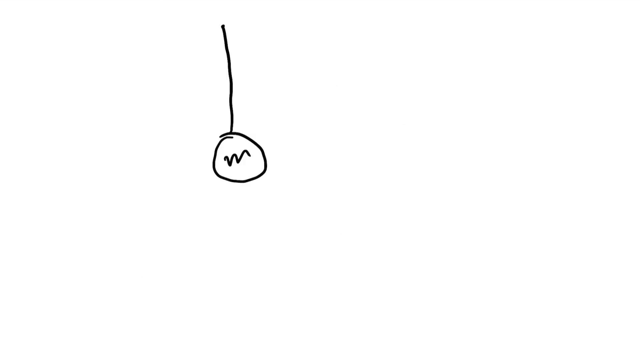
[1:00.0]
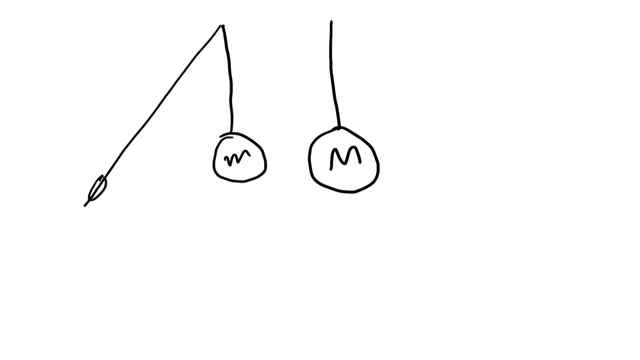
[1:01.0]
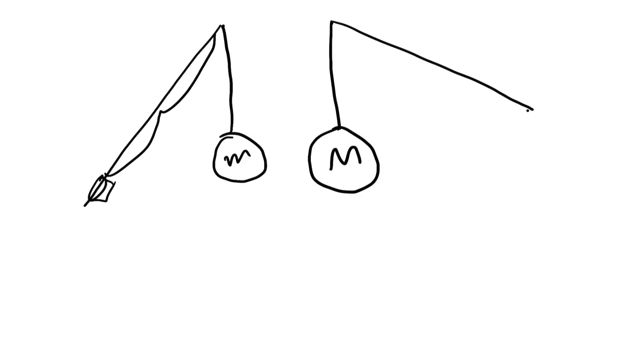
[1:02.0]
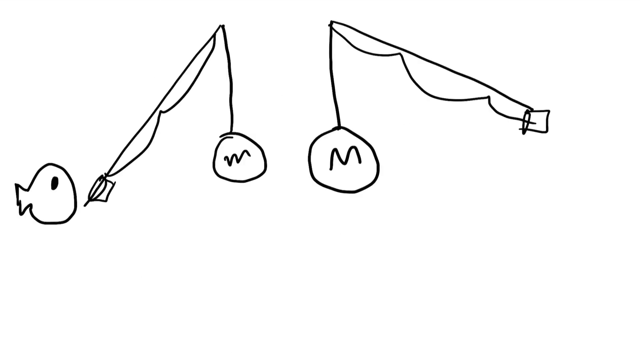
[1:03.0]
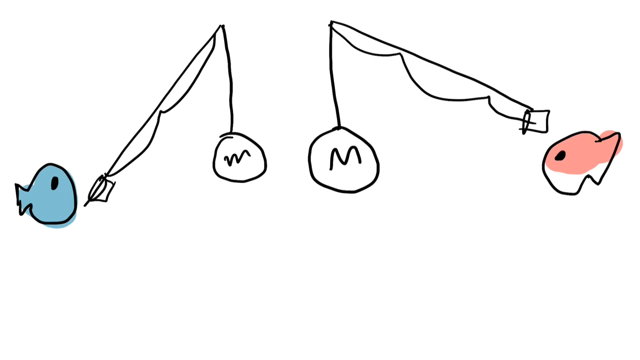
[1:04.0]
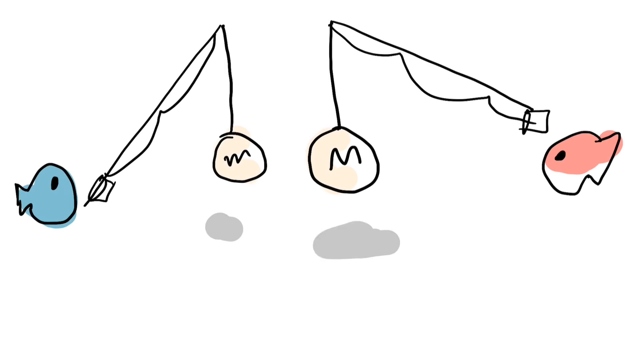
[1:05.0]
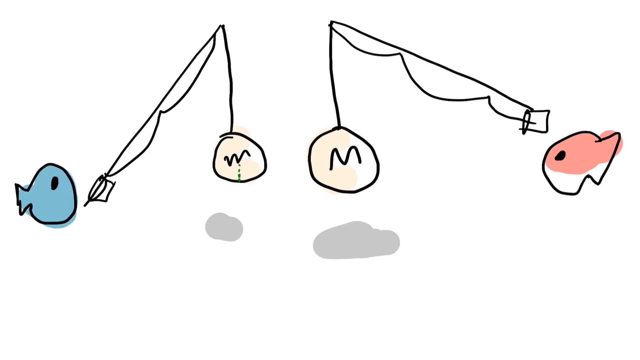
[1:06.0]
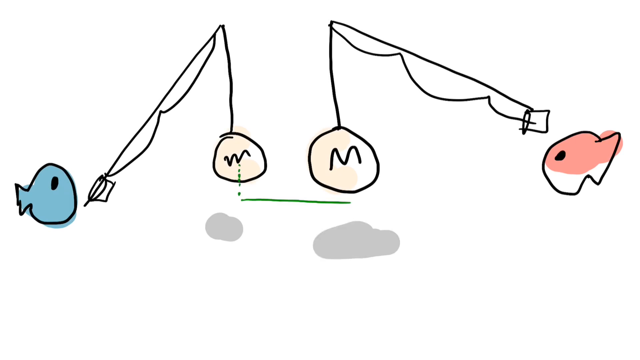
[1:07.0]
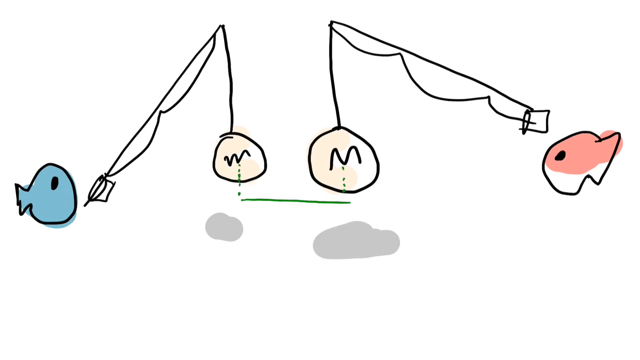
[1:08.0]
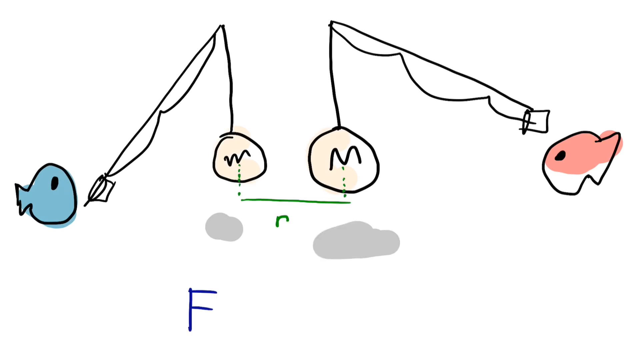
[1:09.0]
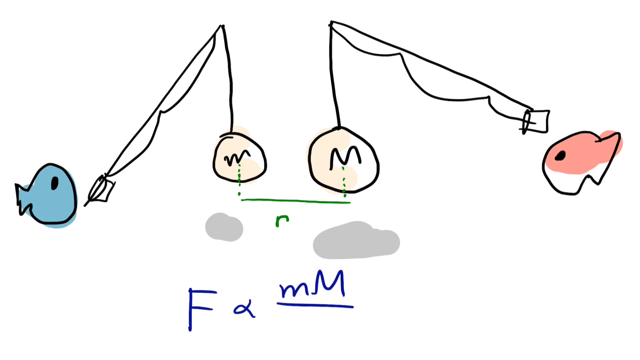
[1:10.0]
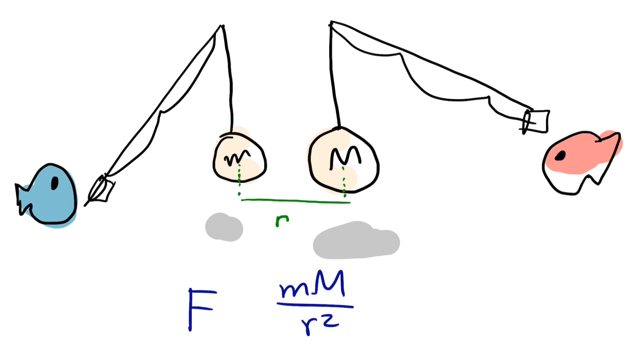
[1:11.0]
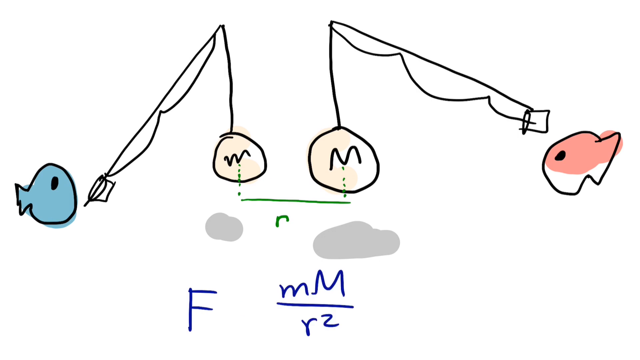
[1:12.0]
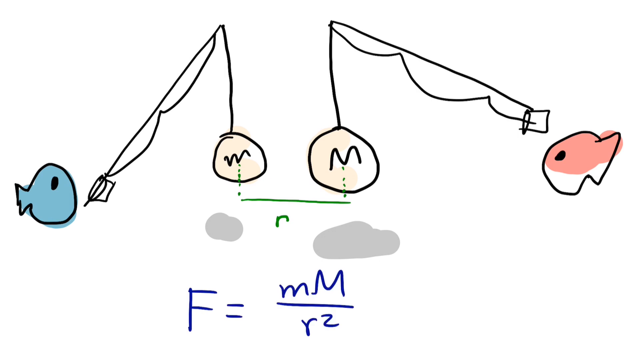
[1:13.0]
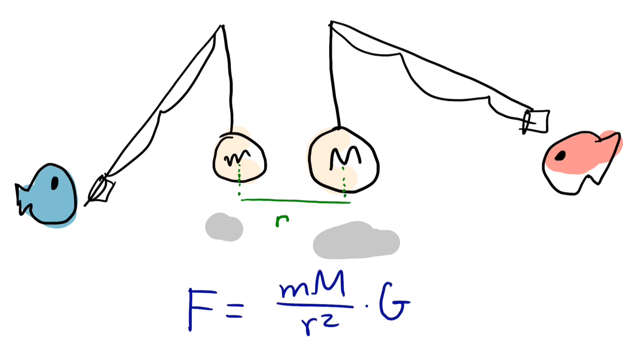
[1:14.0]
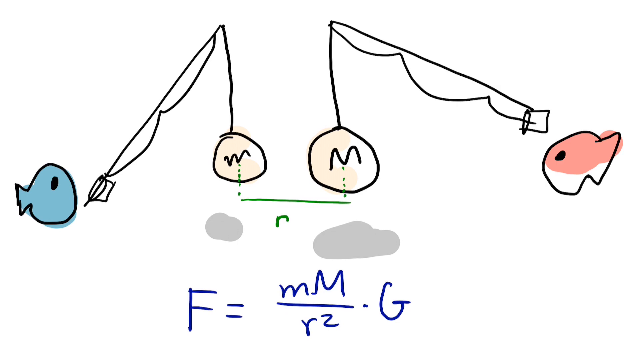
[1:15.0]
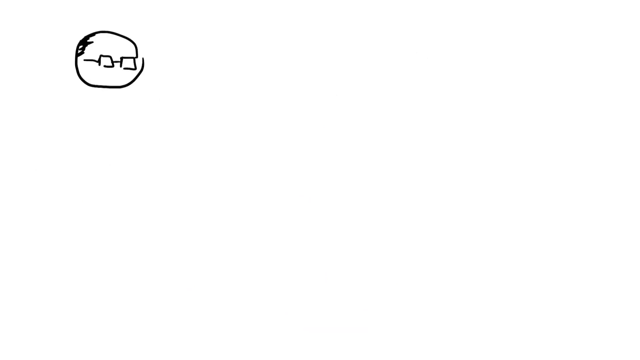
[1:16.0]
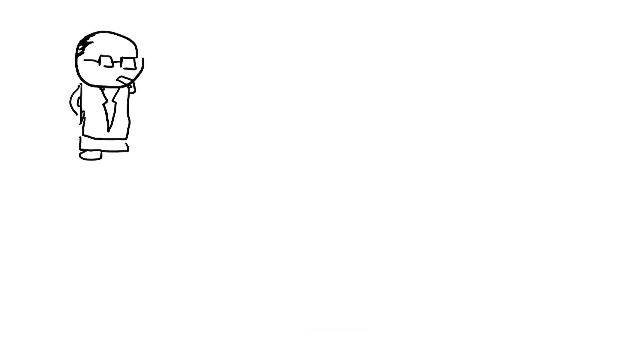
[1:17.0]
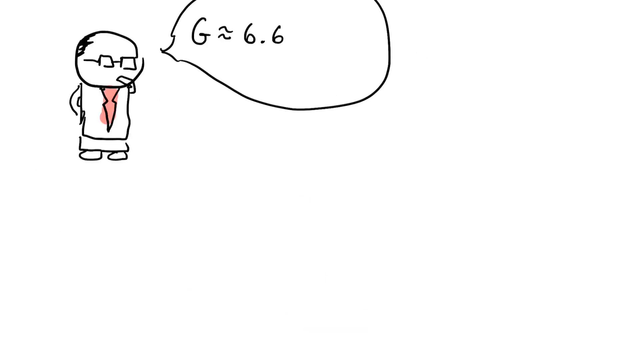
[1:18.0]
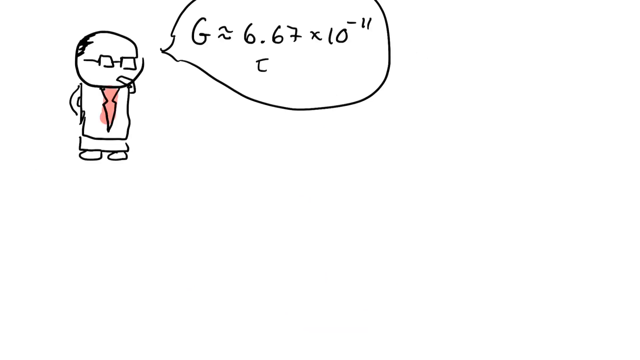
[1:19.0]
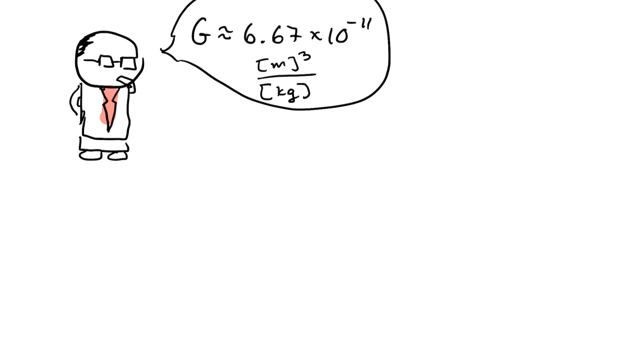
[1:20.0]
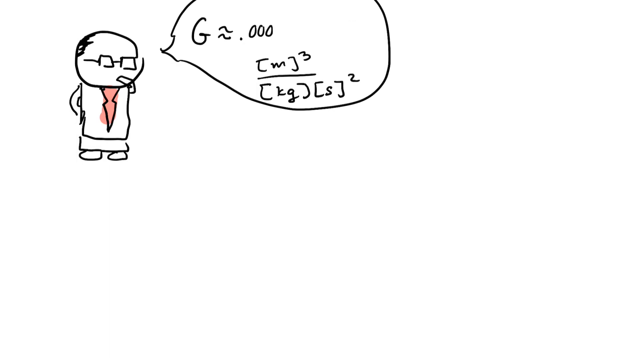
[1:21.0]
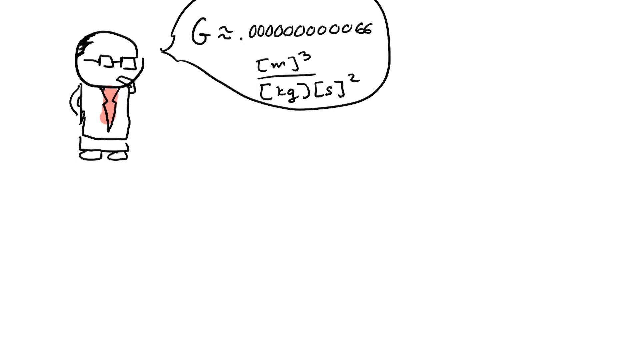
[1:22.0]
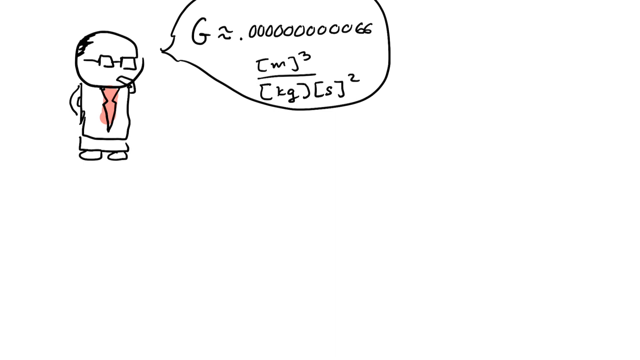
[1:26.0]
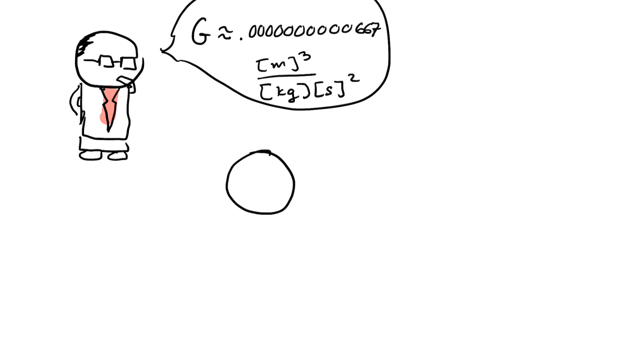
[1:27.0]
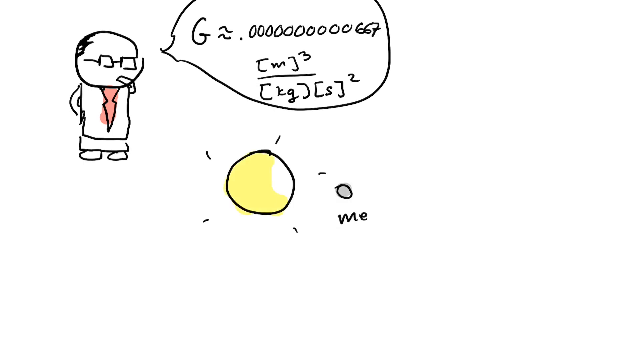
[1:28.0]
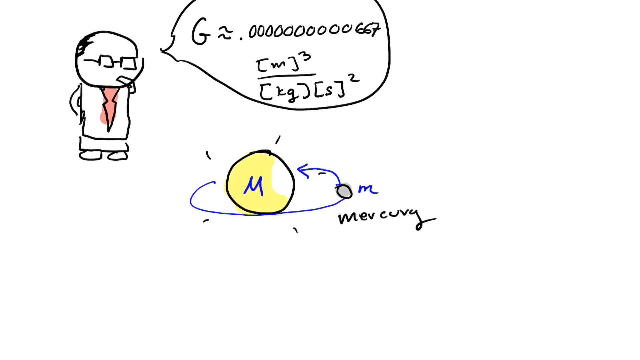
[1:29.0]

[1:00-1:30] Another drawing appears, this time looking like a face. A fishing pole is drawn, and at its end is an M with a circle around it, colored in light yellow. On the left is a blue fish, and on the right is a peach-colored fish with a black outline, drawn very simply with a dot for an eye. The peach fish also has a fishing pole with a circled M, and underneath both of the M's the fish are holding there is a line. In the next frame there is a scientist wearing a pink tie, with equations in a thought bubble.